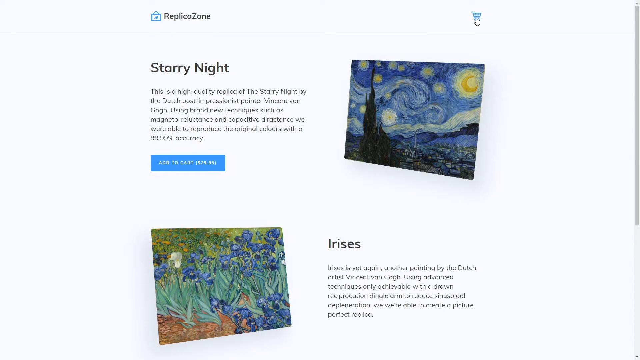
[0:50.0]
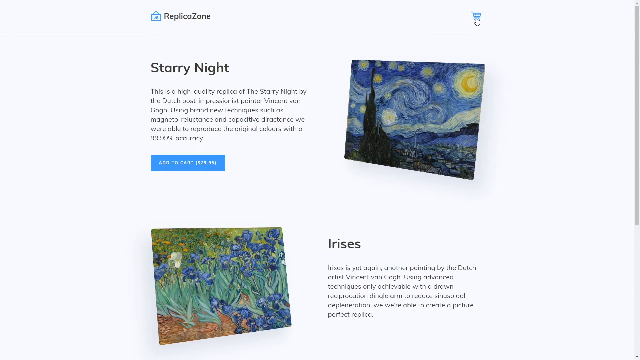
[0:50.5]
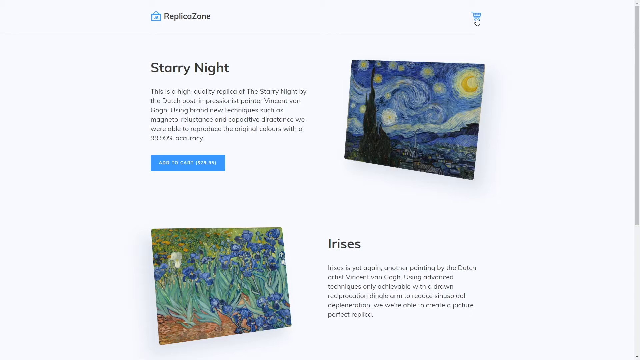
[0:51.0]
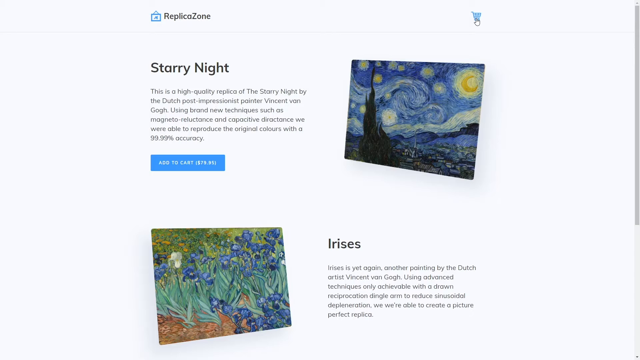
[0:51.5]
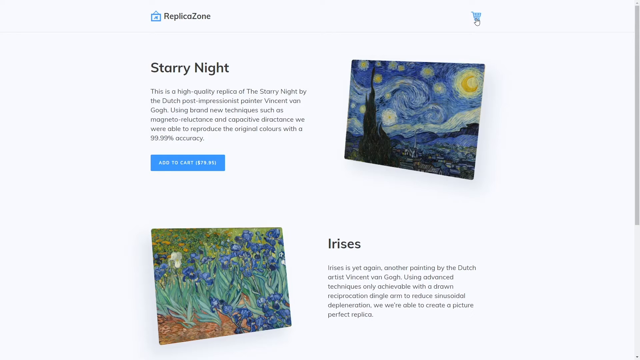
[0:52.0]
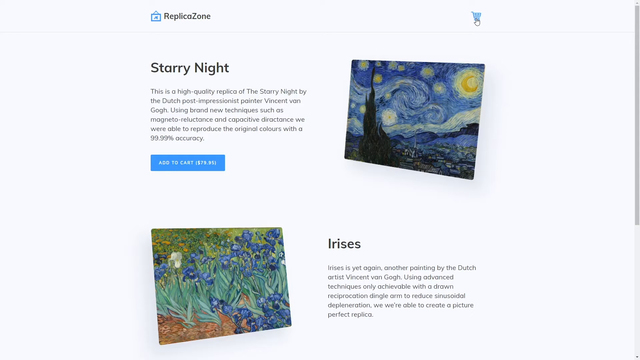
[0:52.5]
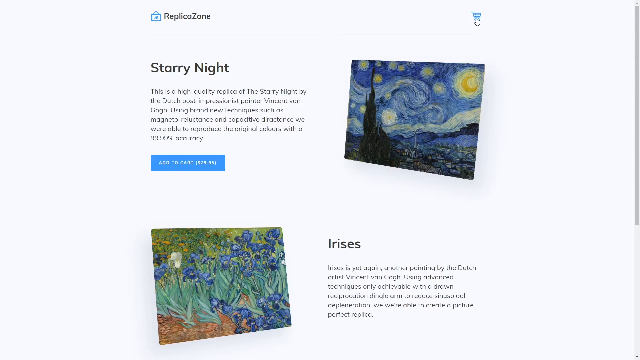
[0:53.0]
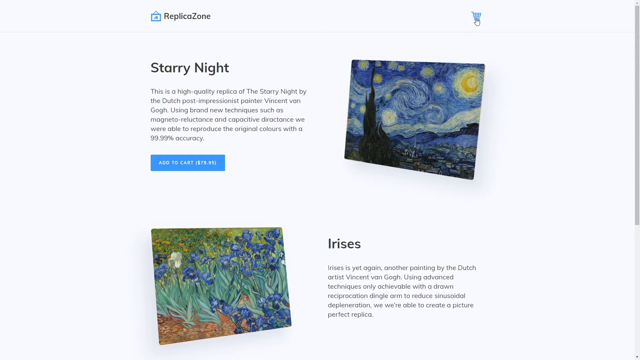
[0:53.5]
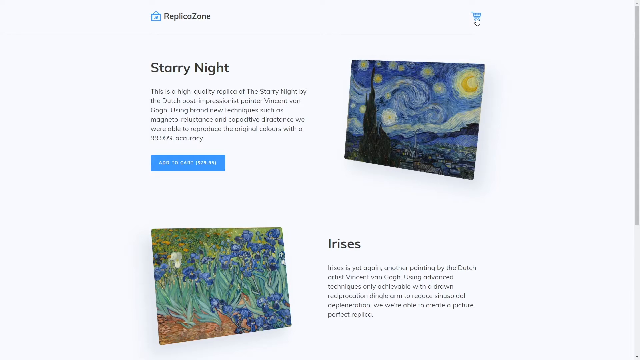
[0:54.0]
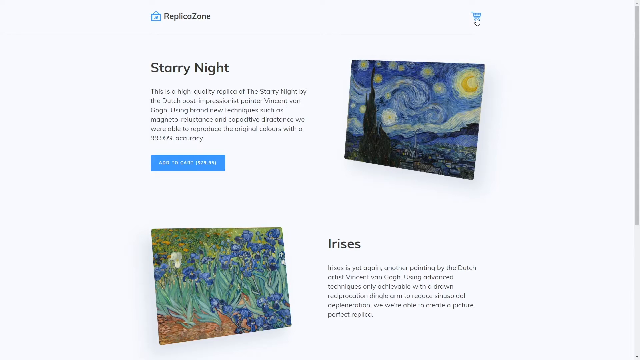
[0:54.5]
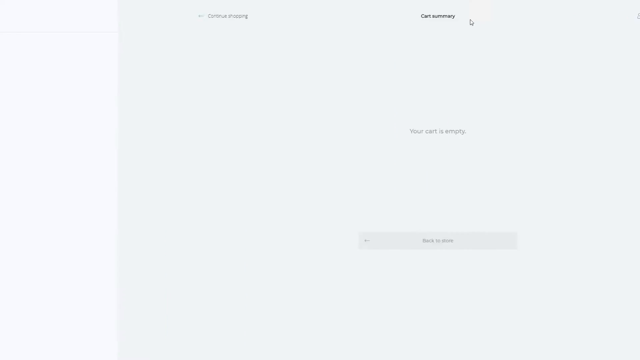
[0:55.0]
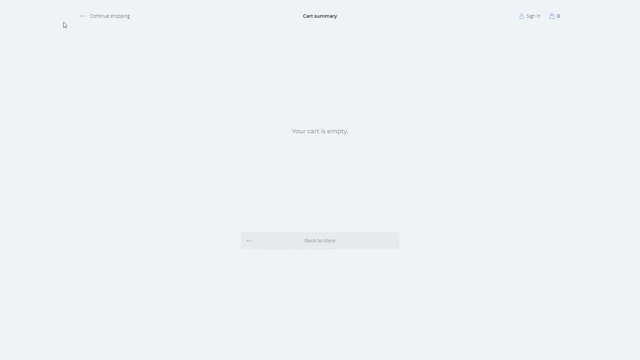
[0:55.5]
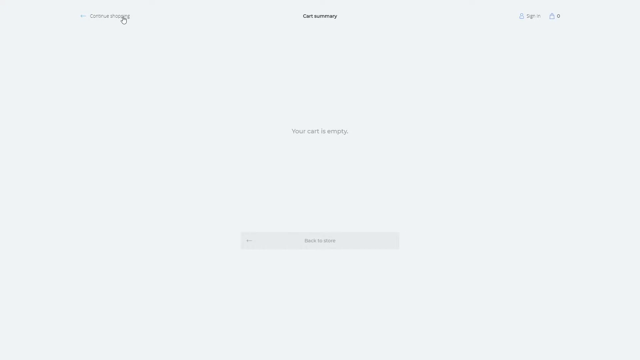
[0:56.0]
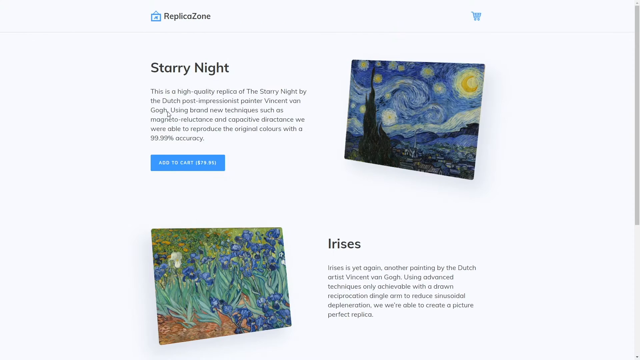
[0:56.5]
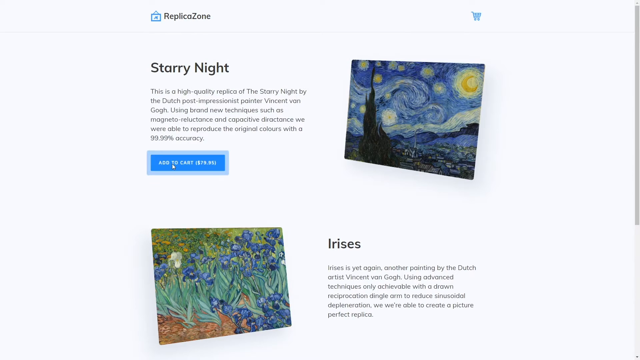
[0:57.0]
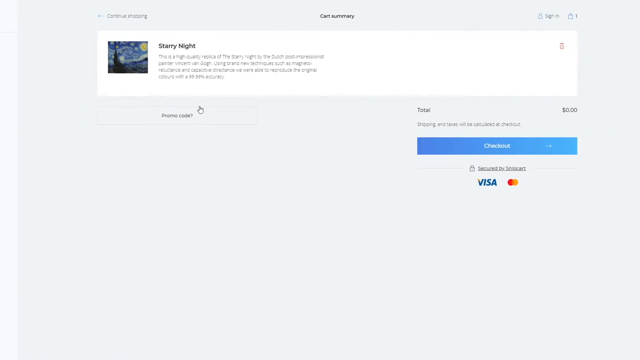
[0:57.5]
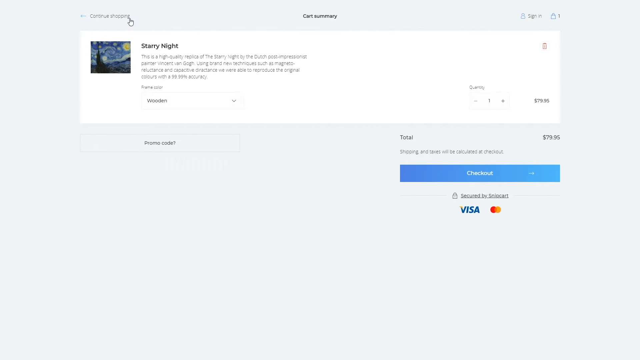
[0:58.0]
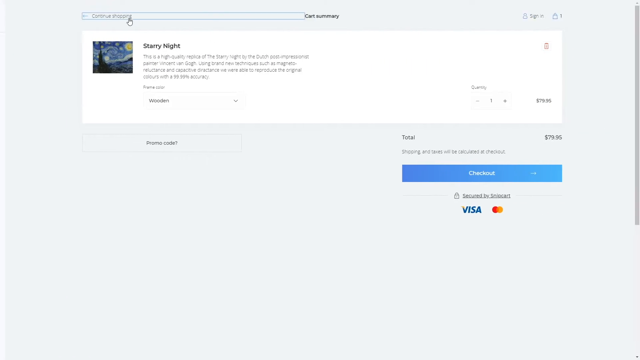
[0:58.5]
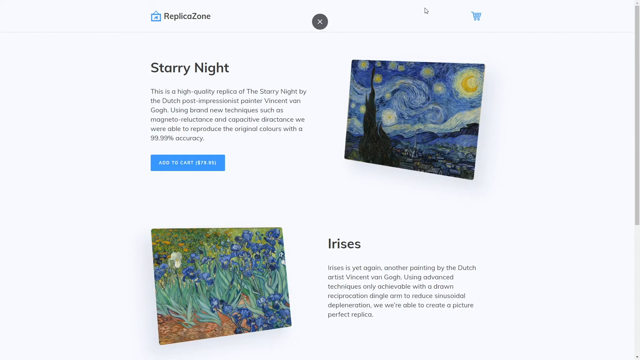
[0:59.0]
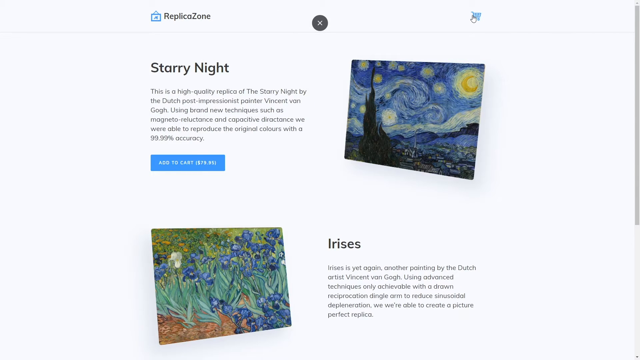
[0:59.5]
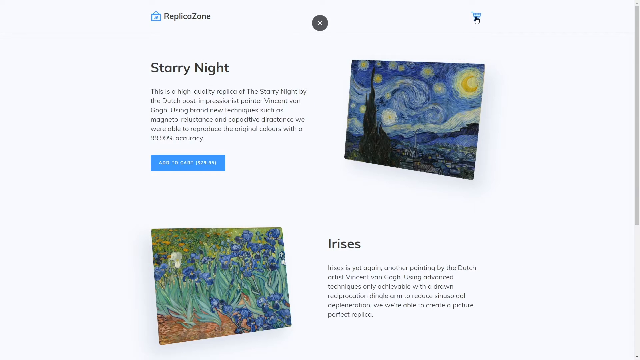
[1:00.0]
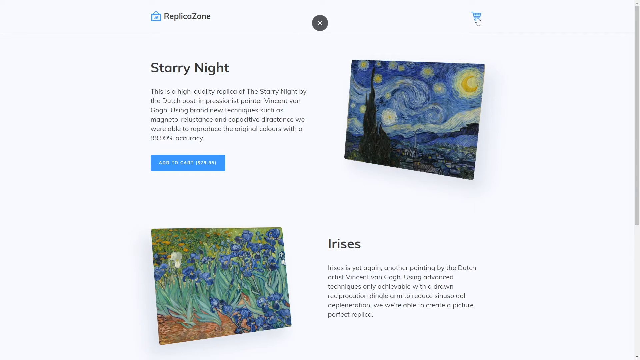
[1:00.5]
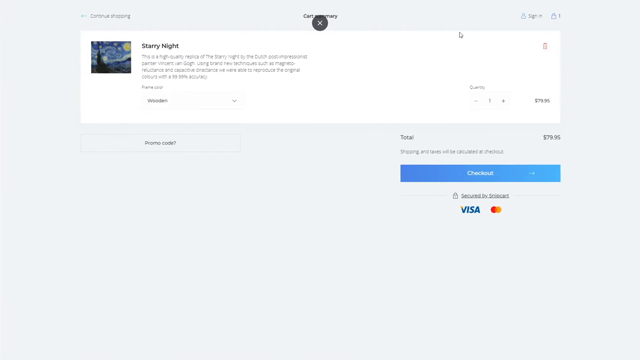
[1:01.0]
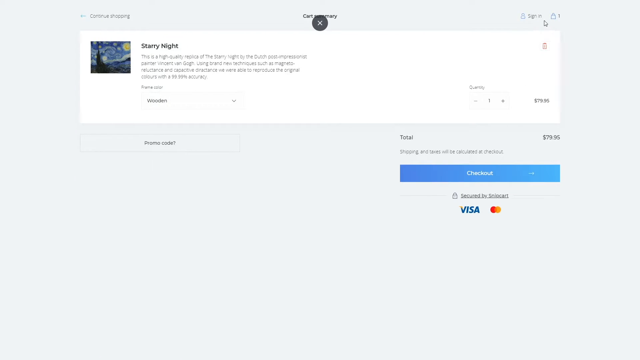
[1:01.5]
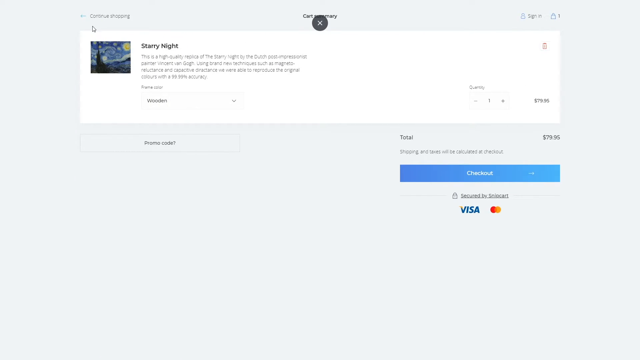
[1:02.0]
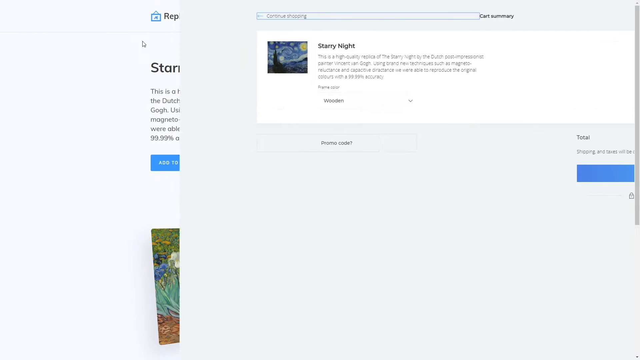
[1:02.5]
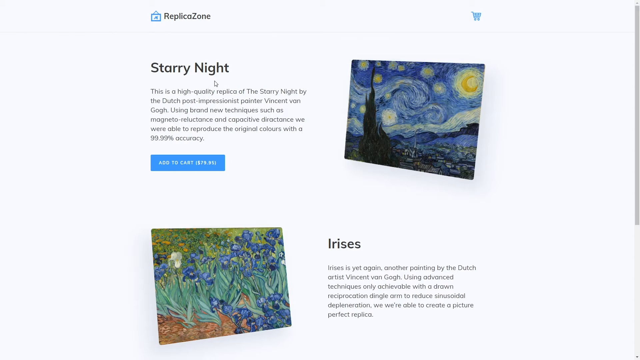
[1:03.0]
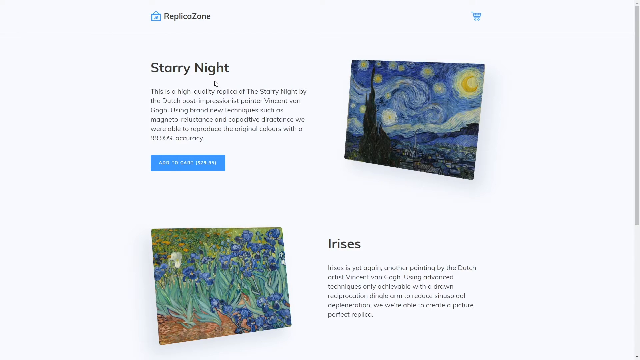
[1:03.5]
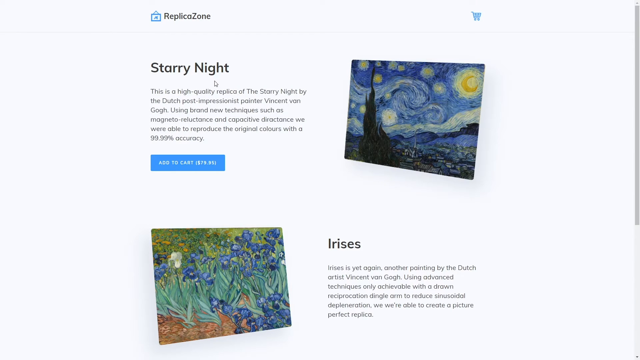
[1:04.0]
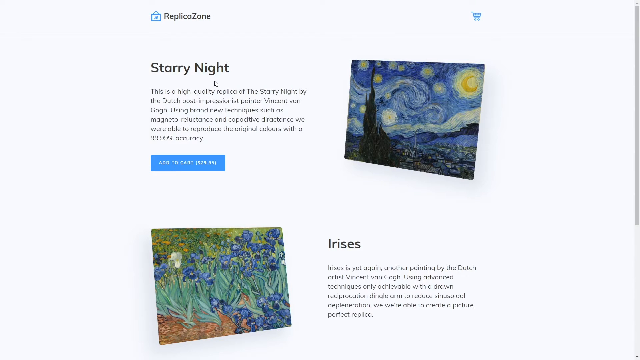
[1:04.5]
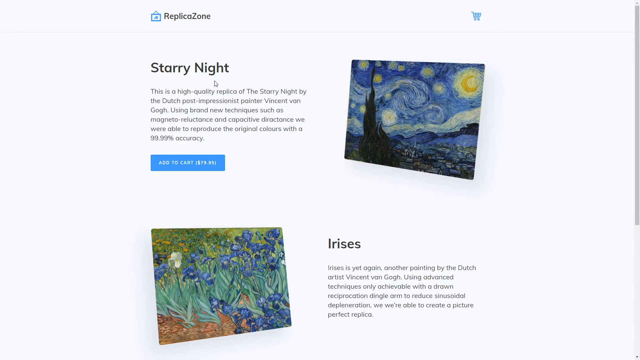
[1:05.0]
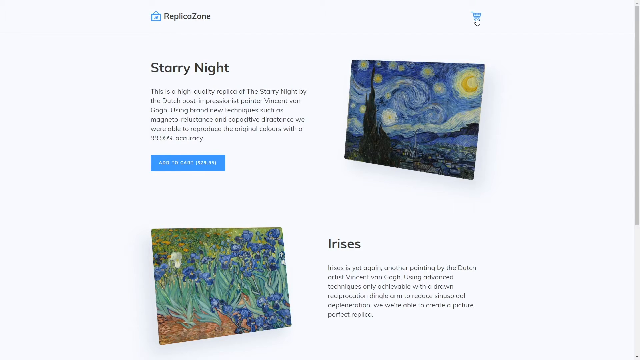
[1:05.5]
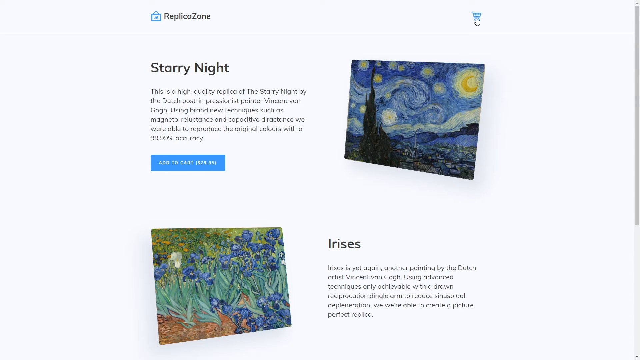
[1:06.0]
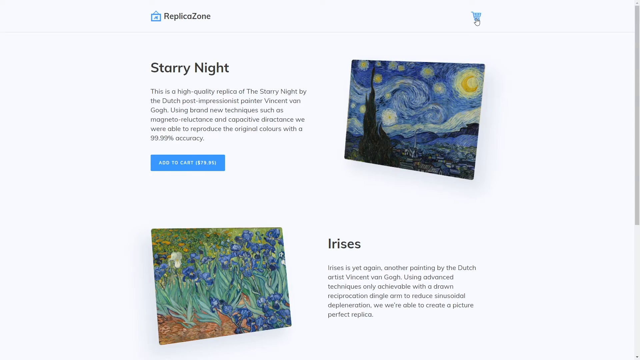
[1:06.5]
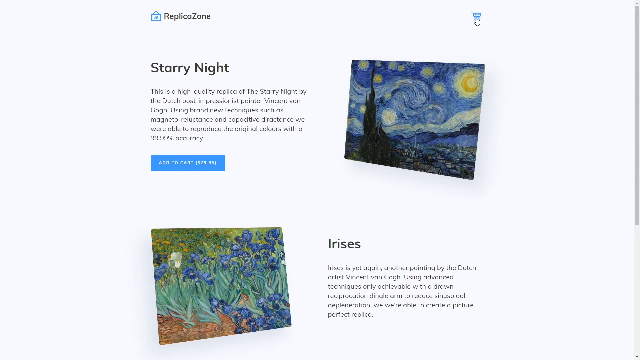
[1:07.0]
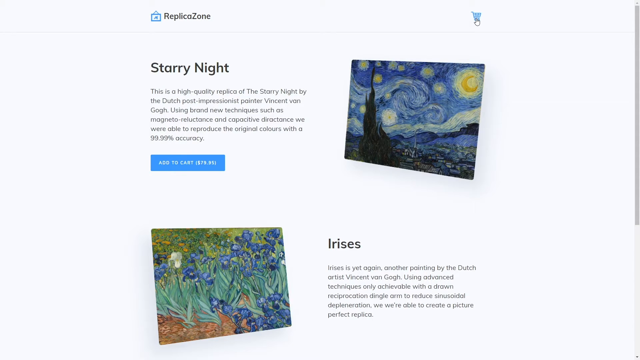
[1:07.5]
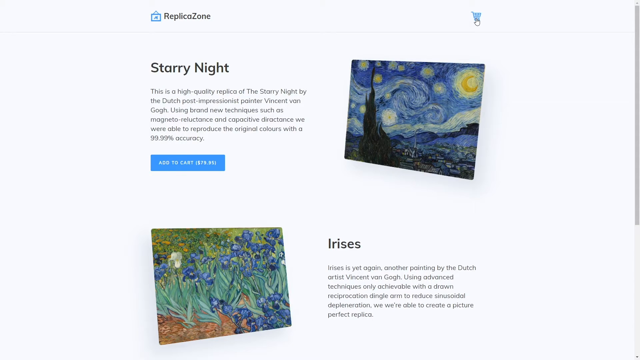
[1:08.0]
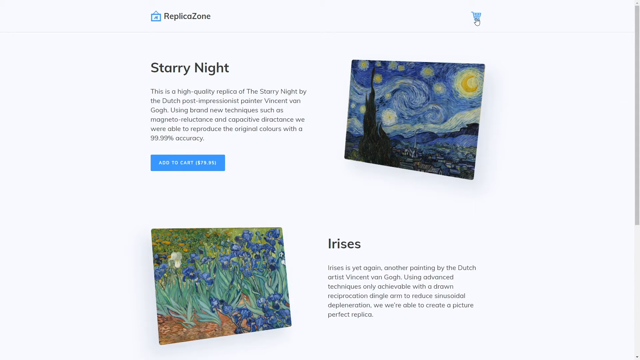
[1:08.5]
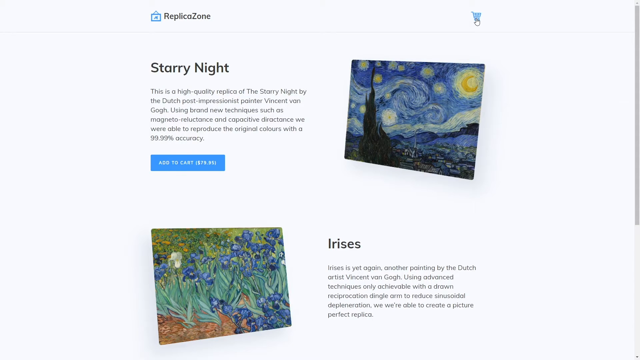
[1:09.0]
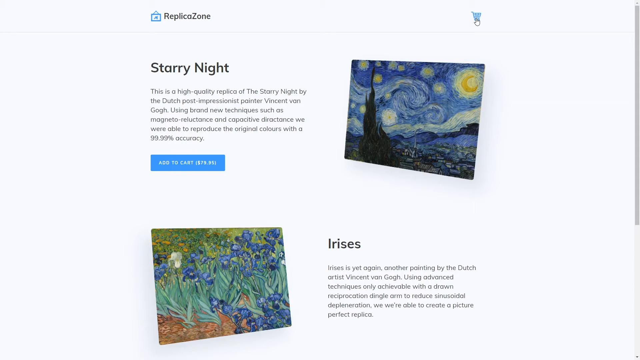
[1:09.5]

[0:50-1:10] On the page with the two paintings, the cursor clicks the little shopping cart and the view goes immediately to the cart page, which also has a white background and shows that Starry Night has been added to the cart, along with the total. The view then switches back and forth three times between the paintings page and the cart page showing Starry Night in the cart. The cursor, a white hand, clicks the little blue shopping cart, then goes back to ReplicaZone, then clicks the shopping cart again. The cart comes up twice, and the view returns to ReplicaZone. This page has a white background with the two paintings available for purchase, in full color and each set at an angle, Starry Night above Irises. The description of Starry Night is to the left of its image, and the description of Irises is immediately under the Starry Night painting and to the right of the Irises image.